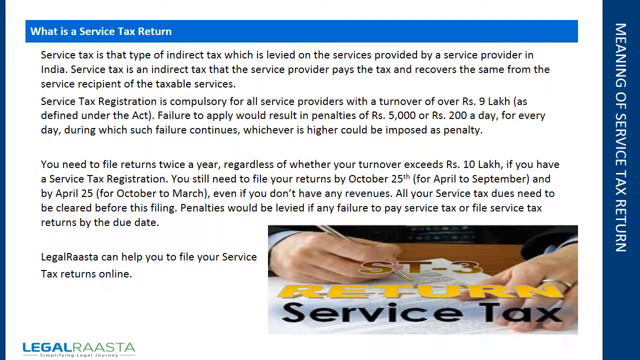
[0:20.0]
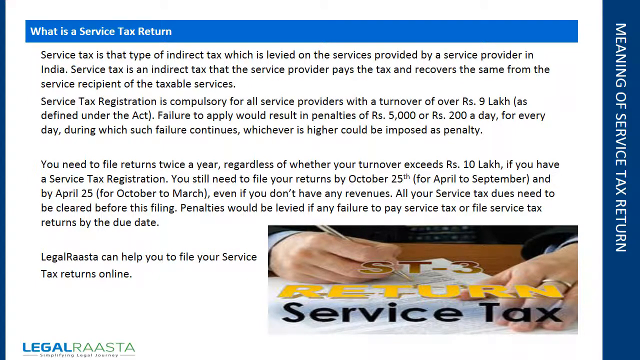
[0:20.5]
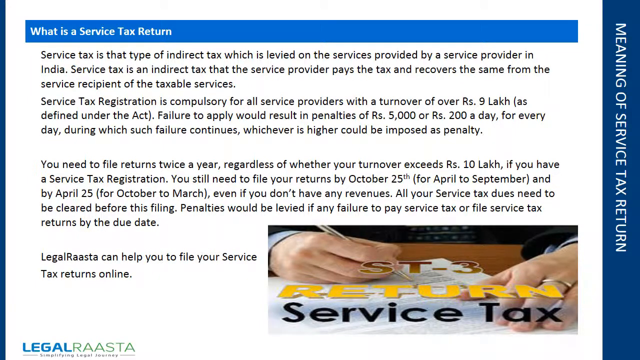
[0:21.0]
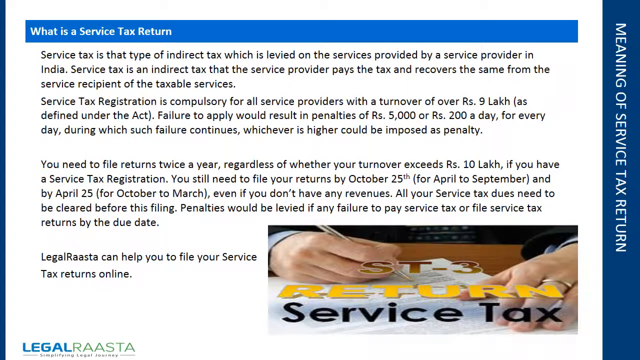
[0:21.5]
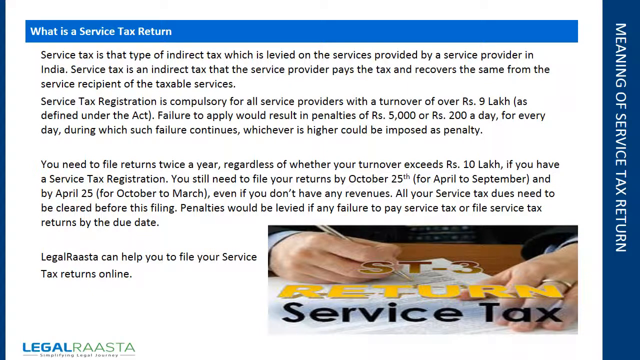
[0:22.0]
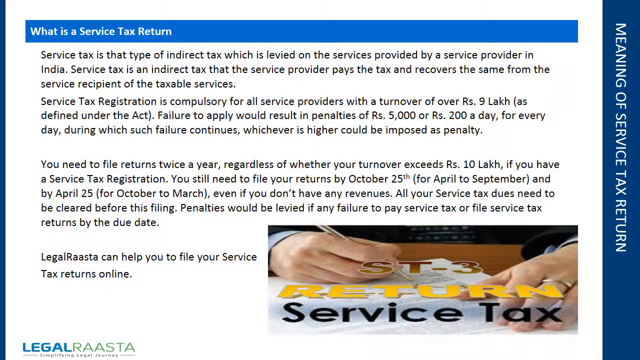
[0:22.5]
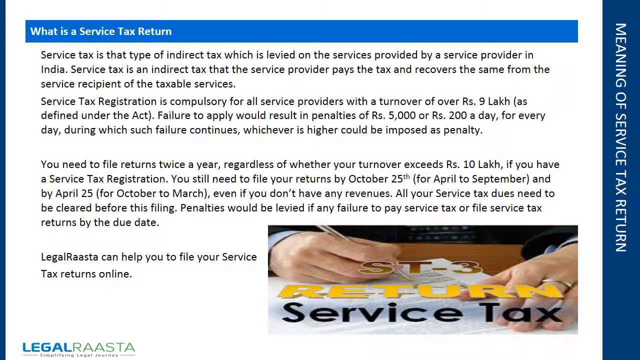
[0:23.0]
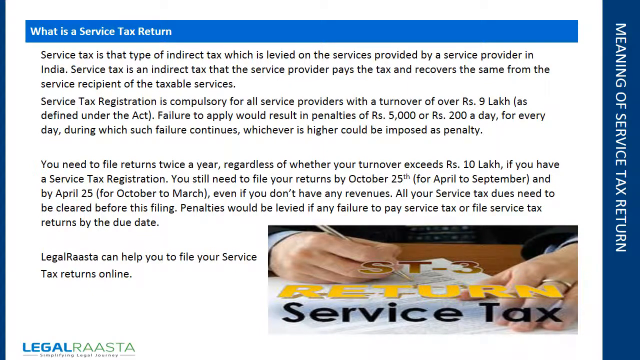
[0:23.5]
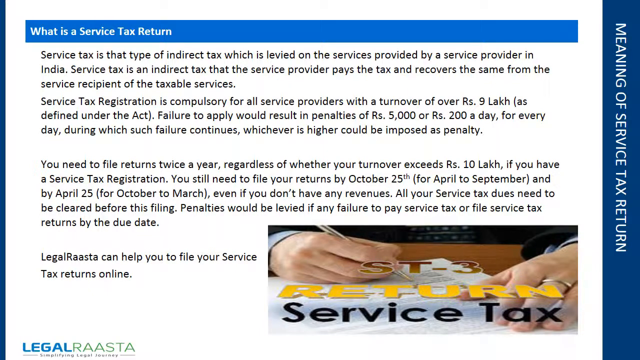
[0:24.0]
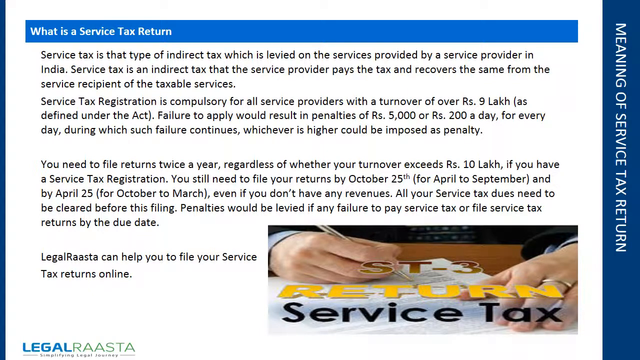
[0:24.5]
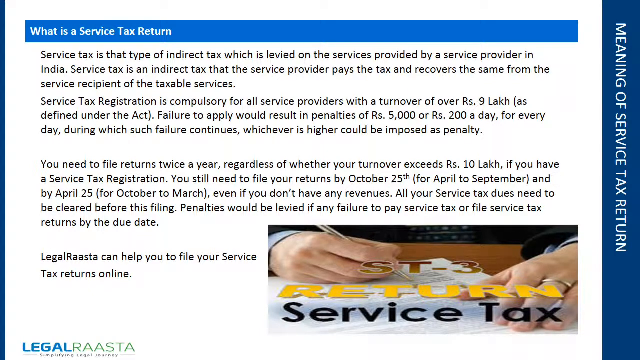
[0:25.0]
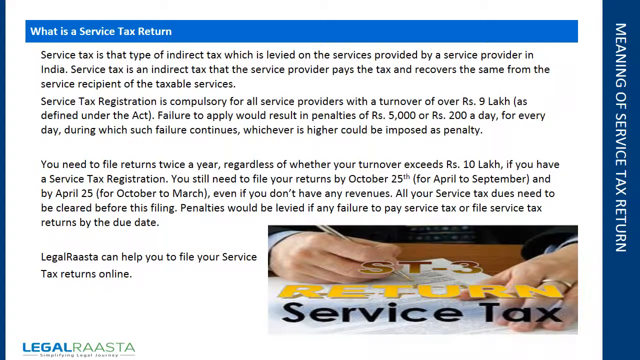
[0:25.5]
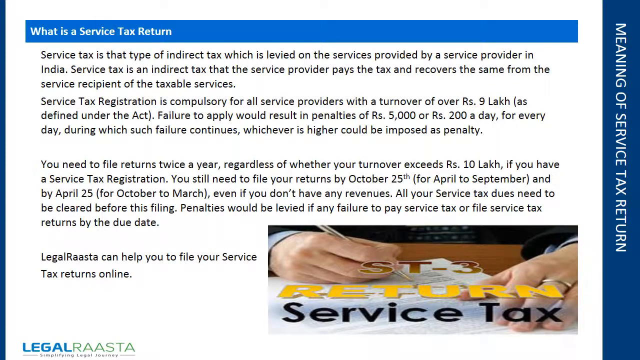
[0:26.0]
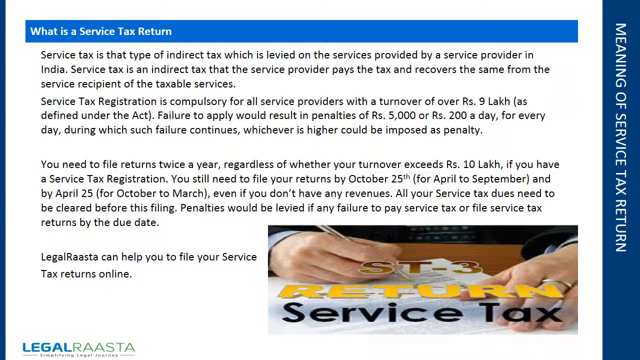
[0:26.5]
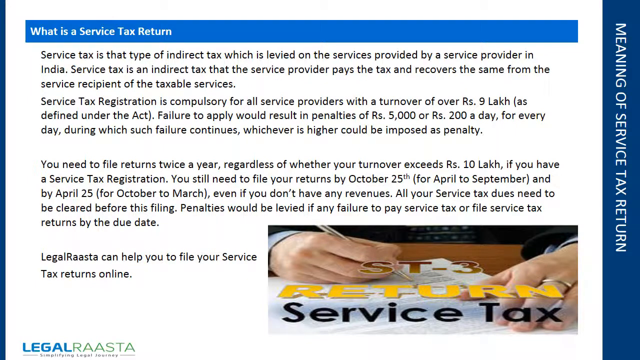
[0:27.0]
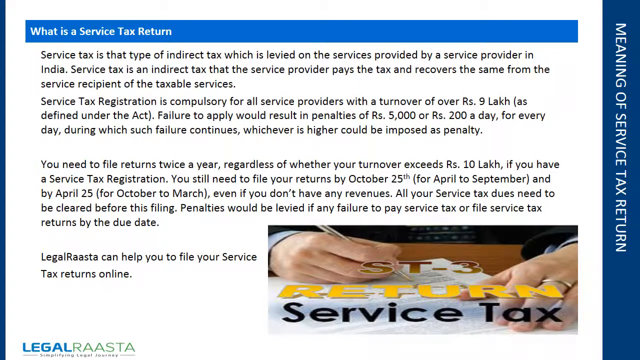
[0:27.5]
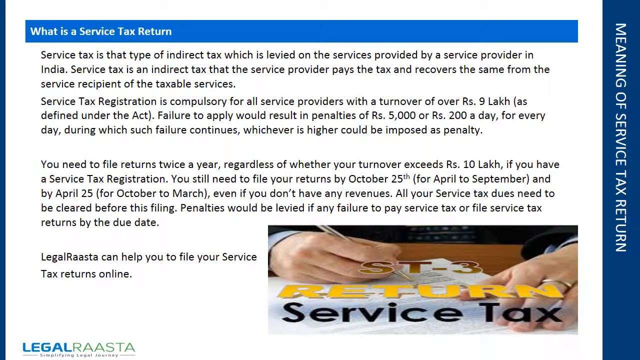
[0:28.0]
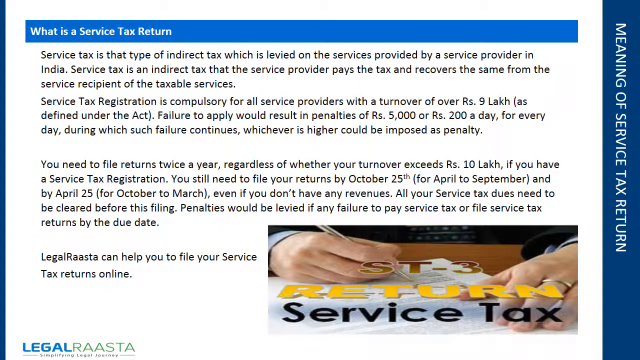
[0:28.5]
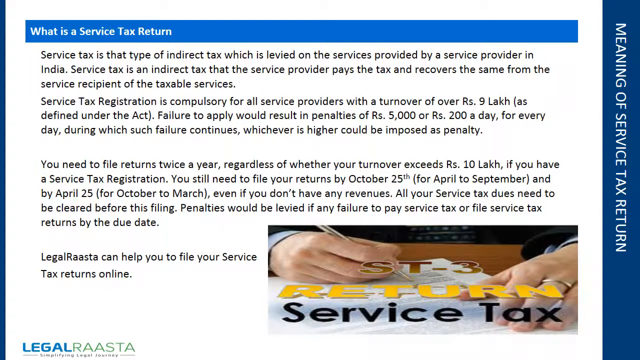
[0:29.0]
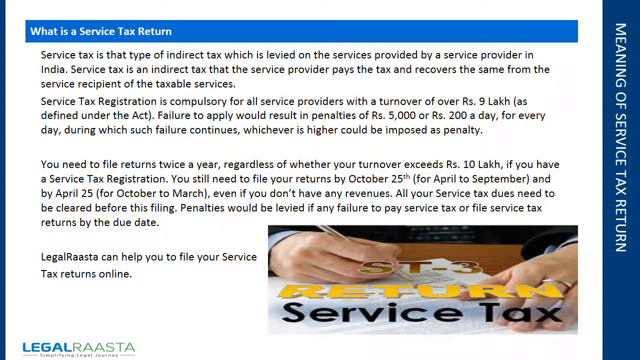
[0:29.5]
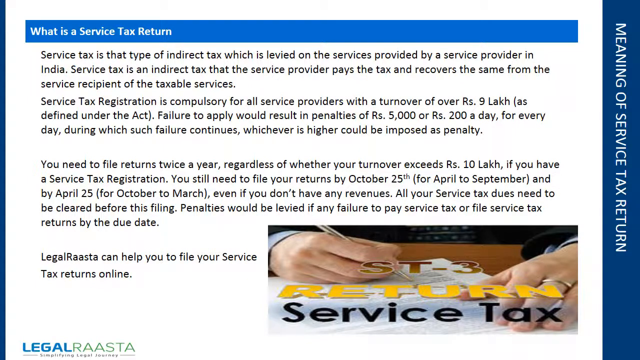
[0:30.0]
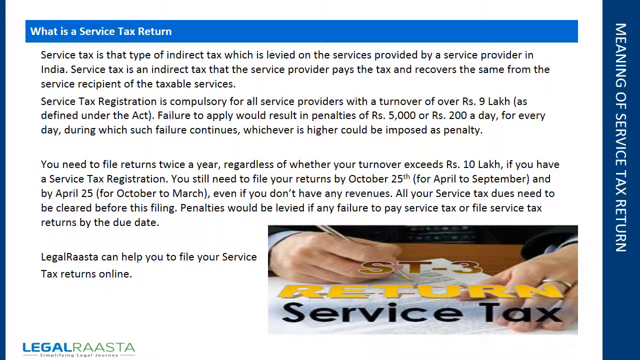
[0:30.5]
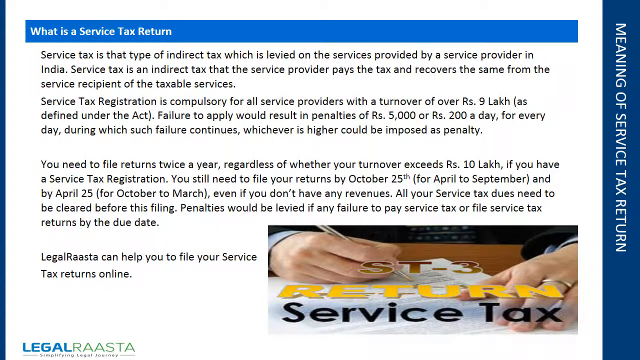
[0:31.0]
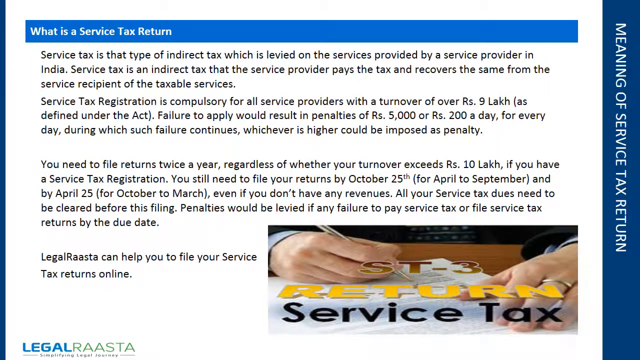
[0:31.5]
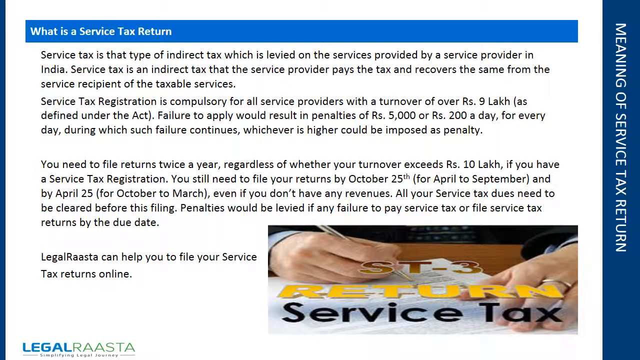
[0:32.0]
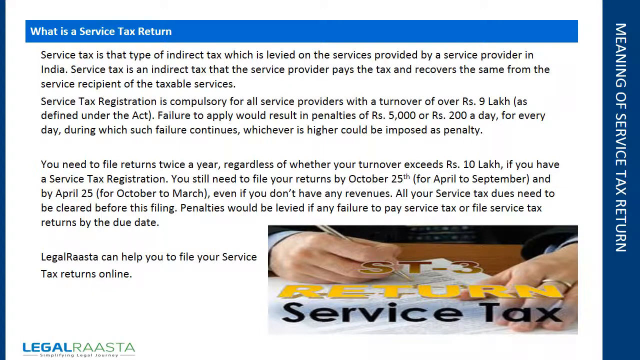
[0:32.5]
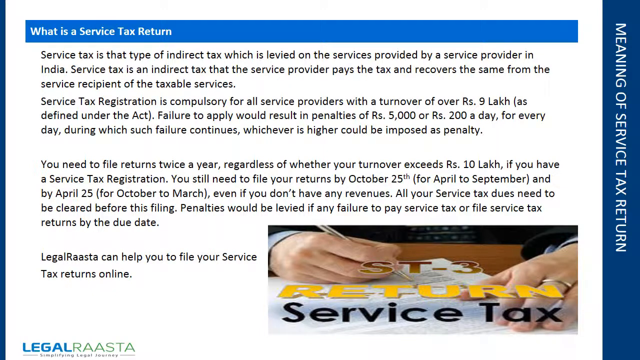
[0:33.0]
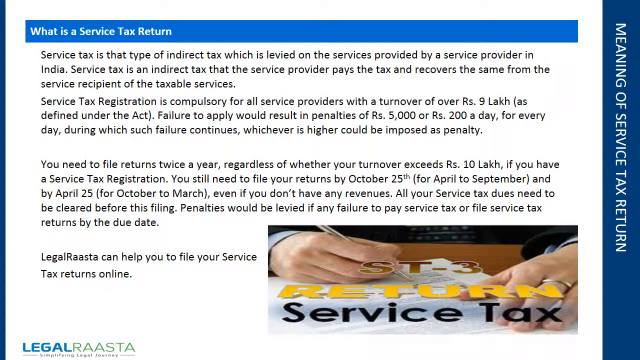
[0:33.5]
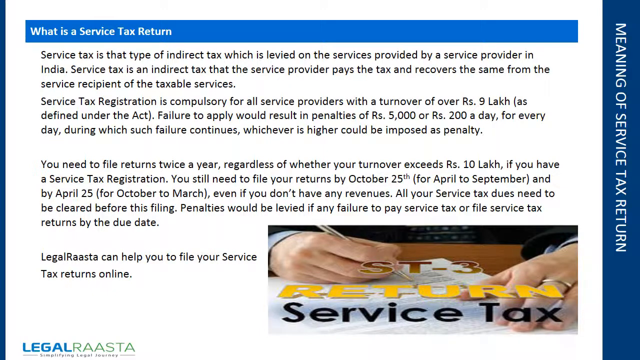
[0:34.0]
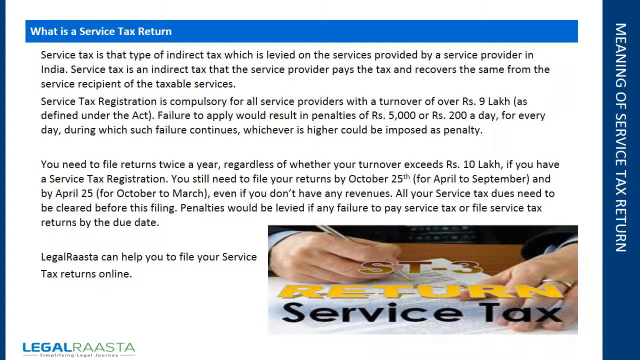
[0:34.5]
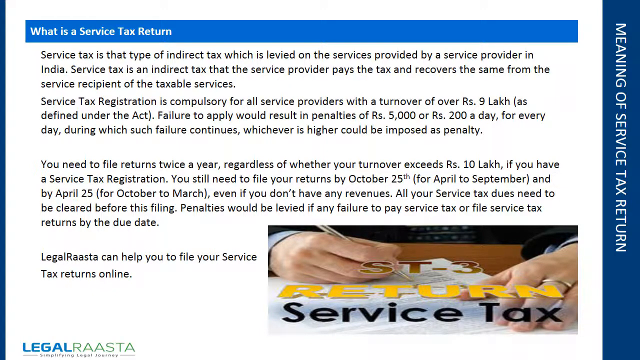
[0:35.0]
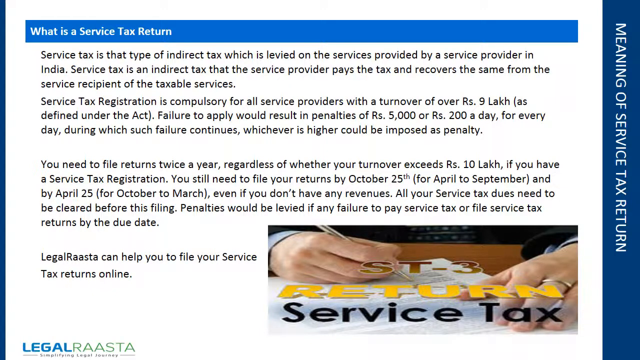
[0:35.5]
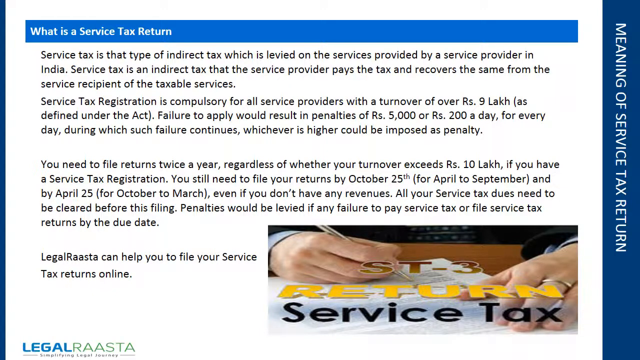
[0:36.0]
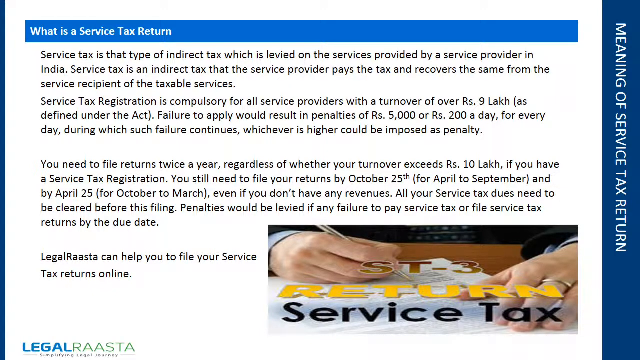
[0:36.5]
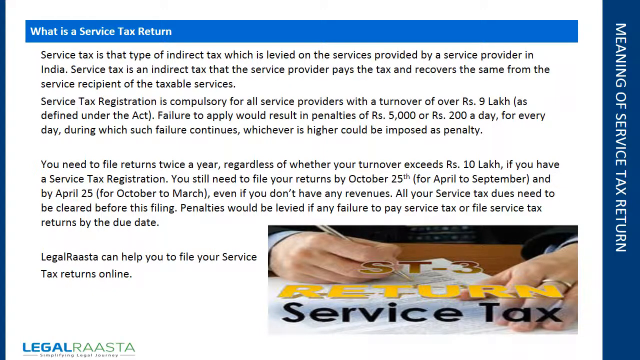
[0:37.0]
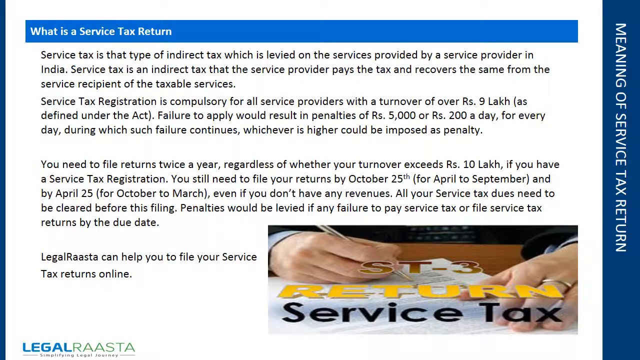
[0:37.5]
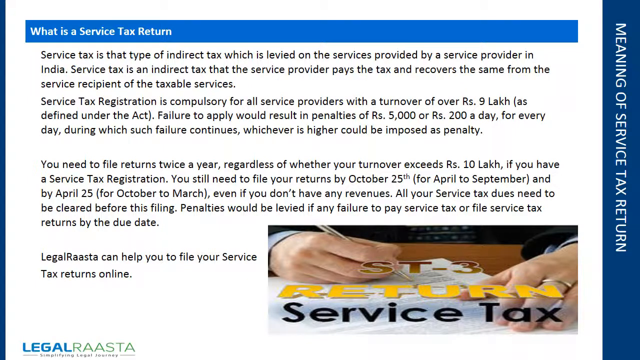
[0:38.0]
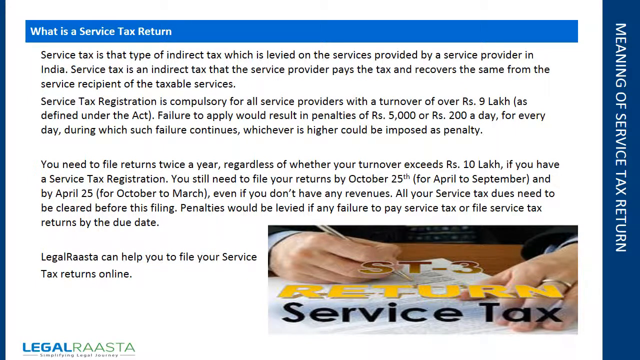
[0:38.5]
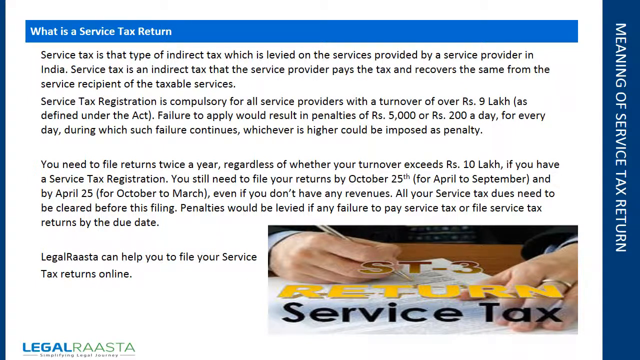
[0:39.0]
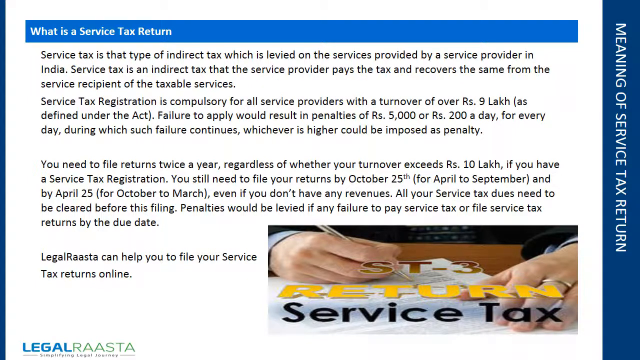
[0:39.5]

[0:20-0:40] A slide with a white background has a dark blue vertical rectangular block in the right margin with white text reading "meaning of service tax return." Across the top of the slide is a lighter blue heading bar, with white text on the left side reading "what is a service tax return." Beneath it, black text on the white background gives information on what service tax is, how it works in India, service tax registration, and possible penalties for failing to apply. At the bottom right of the page is an image that looks like a close-up of a man's hands holding a pen and signing a white document on a wooden desk. Words over the image read "ST-3" in brown font, "return" below it in yellow font, and "service tax" below that in black font.